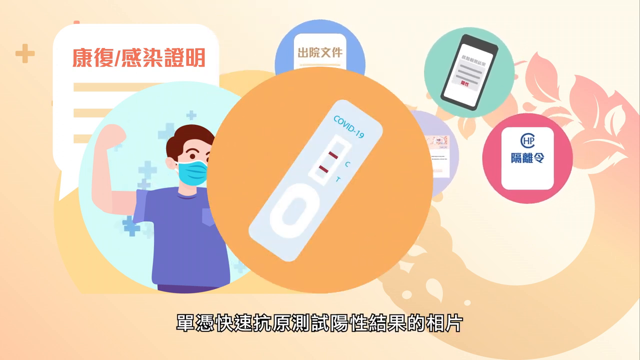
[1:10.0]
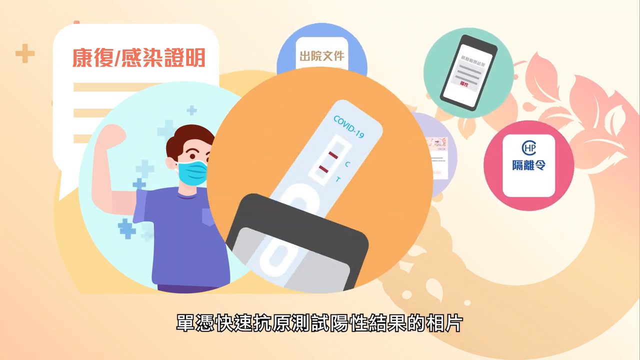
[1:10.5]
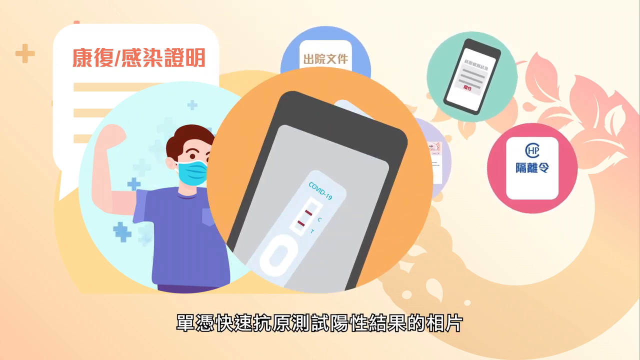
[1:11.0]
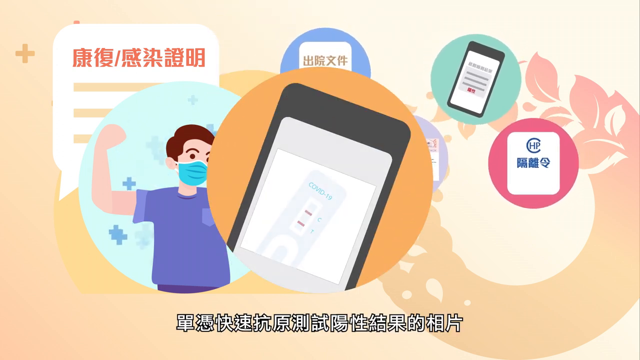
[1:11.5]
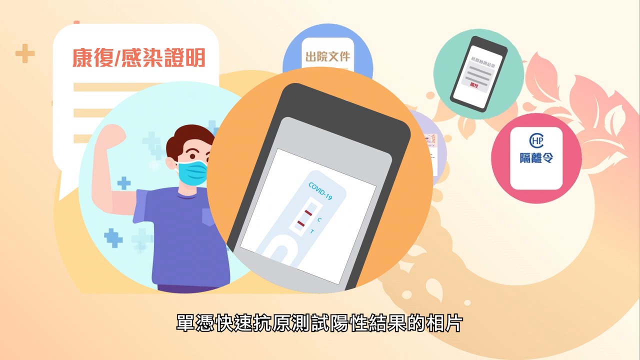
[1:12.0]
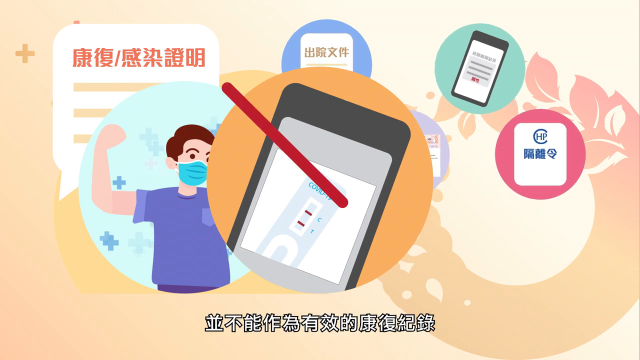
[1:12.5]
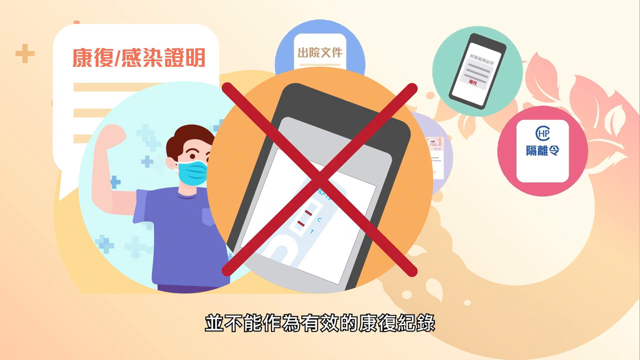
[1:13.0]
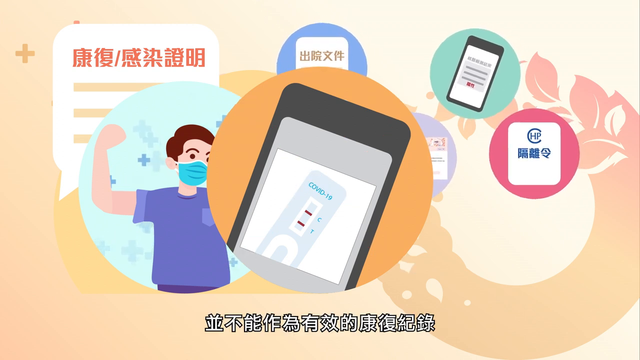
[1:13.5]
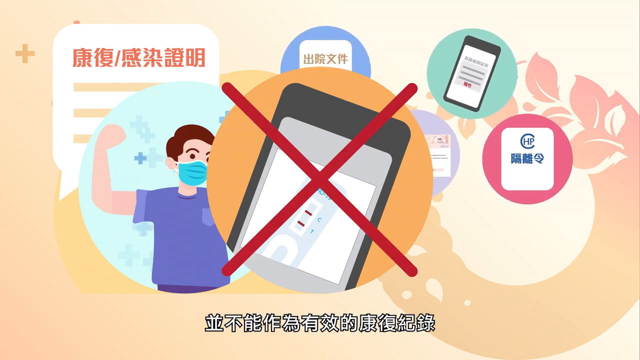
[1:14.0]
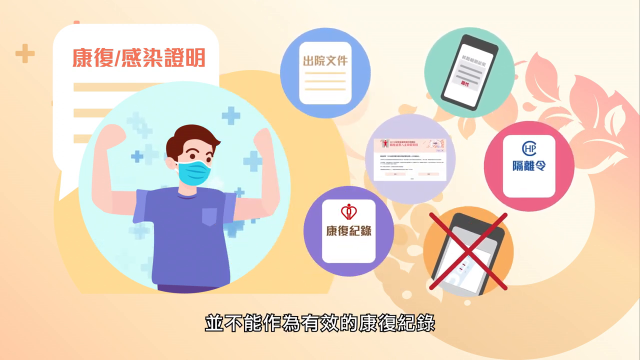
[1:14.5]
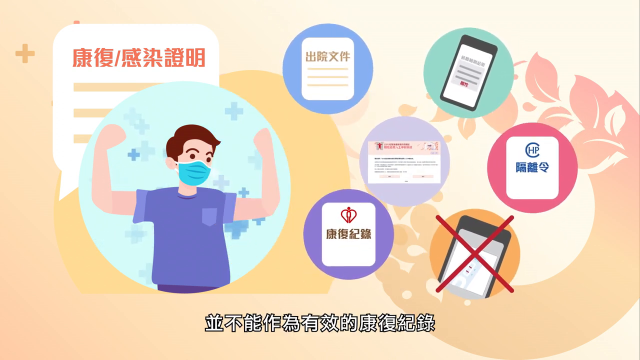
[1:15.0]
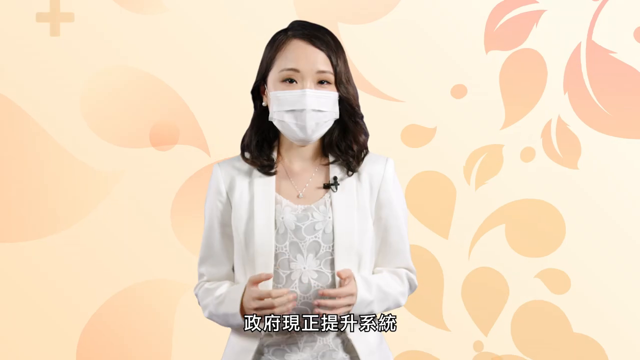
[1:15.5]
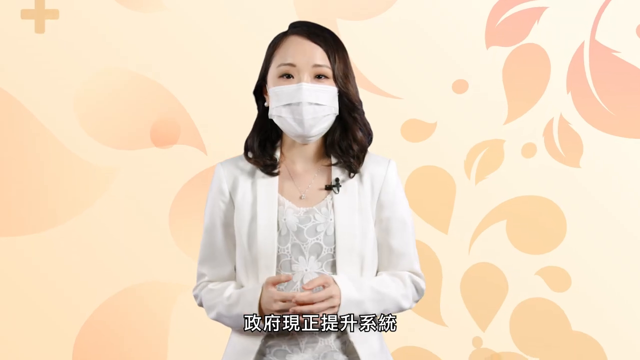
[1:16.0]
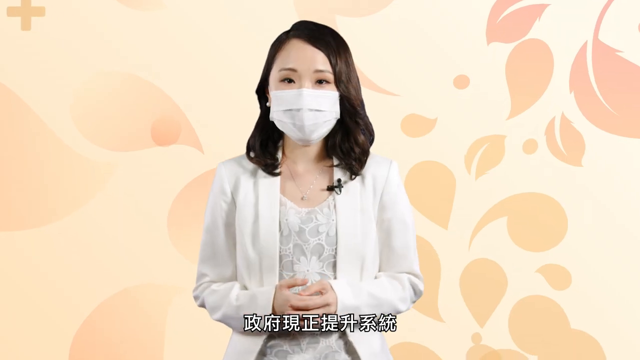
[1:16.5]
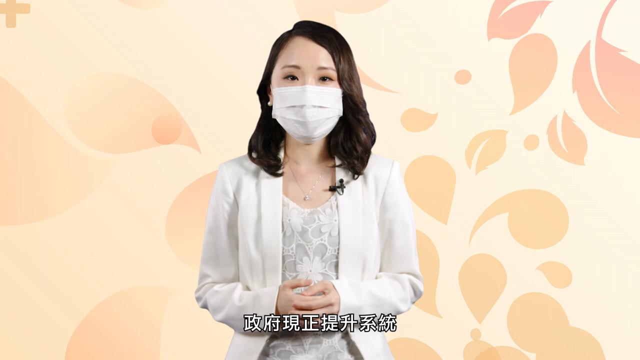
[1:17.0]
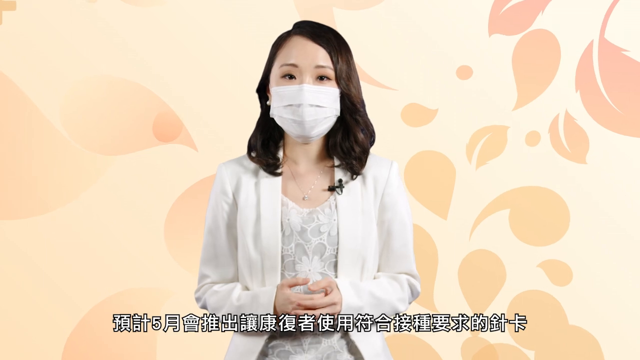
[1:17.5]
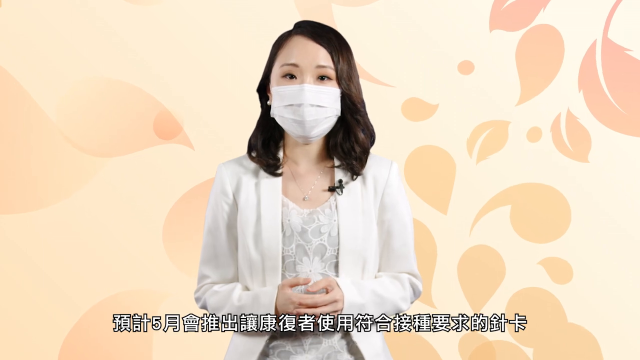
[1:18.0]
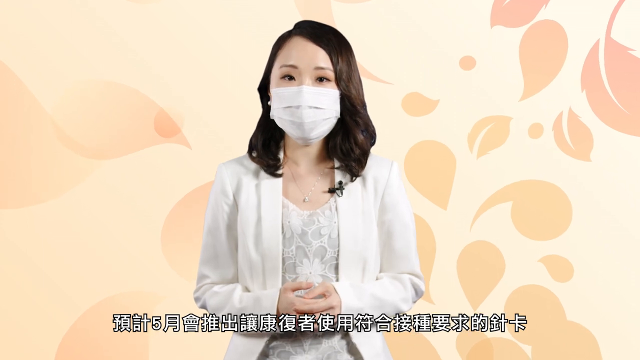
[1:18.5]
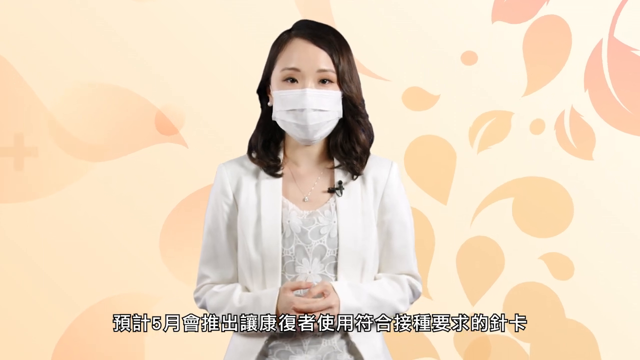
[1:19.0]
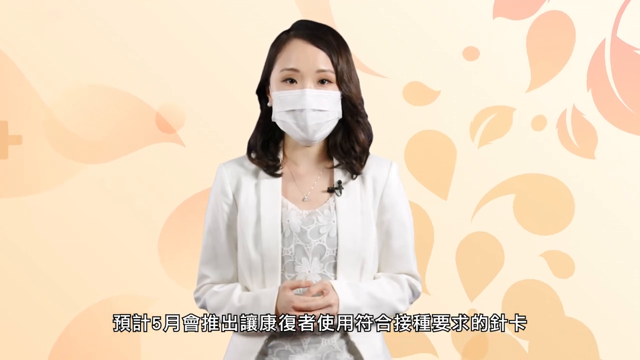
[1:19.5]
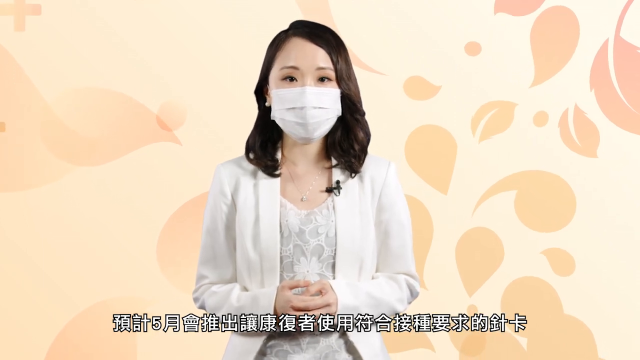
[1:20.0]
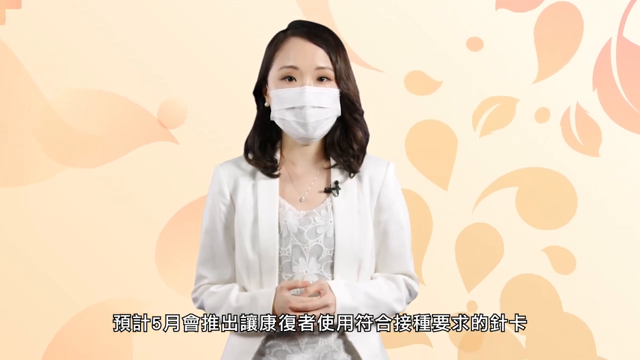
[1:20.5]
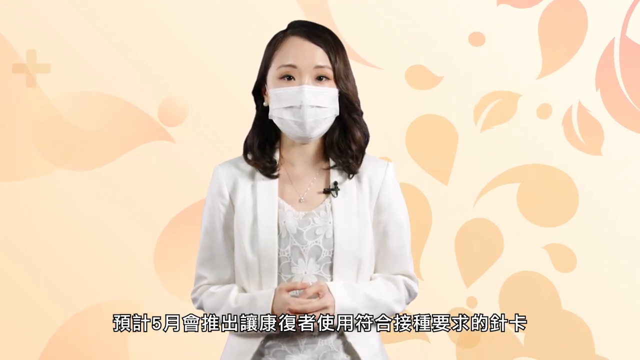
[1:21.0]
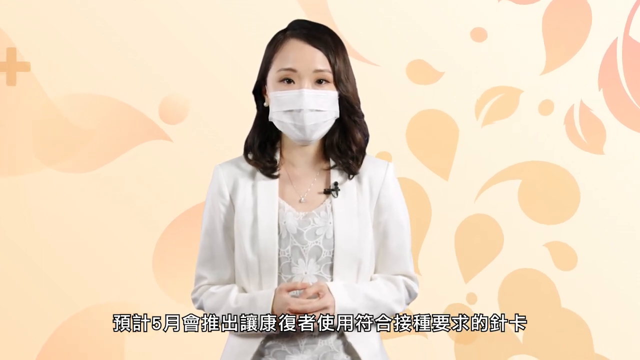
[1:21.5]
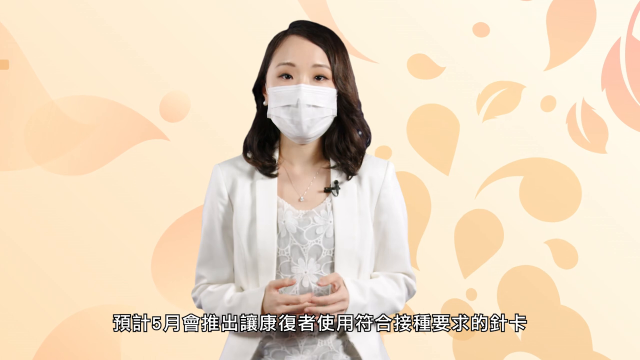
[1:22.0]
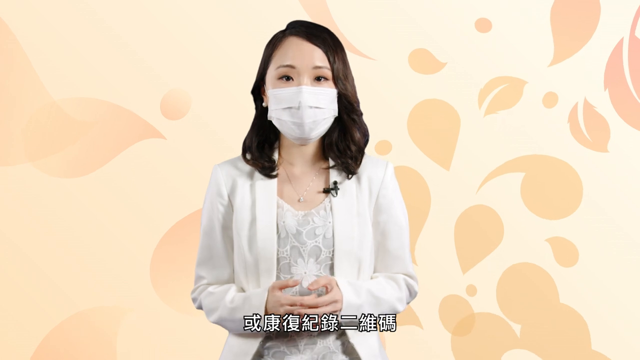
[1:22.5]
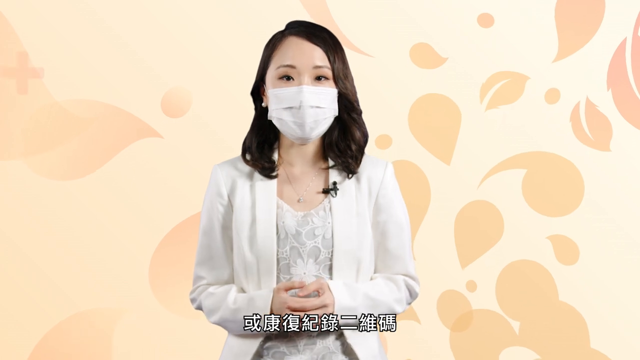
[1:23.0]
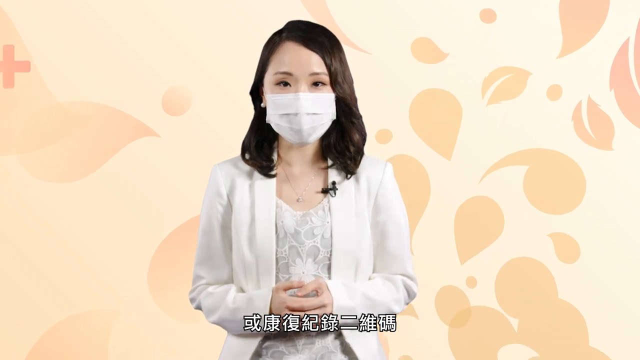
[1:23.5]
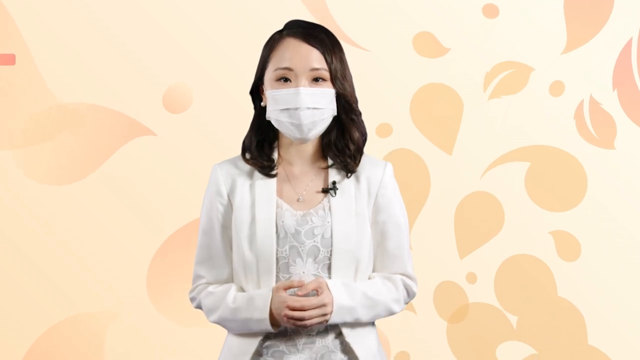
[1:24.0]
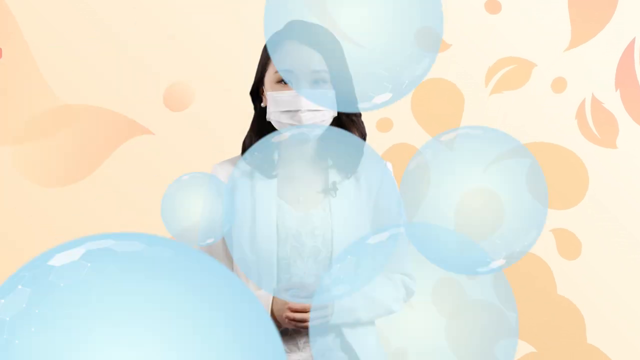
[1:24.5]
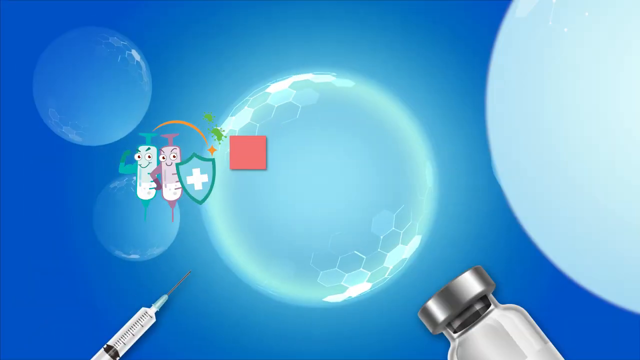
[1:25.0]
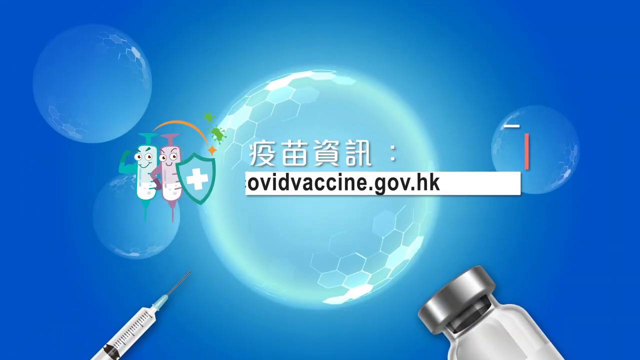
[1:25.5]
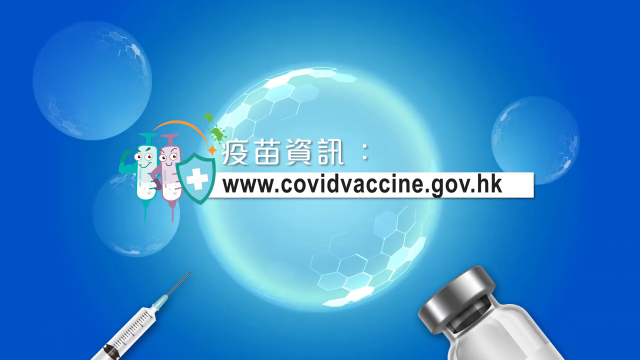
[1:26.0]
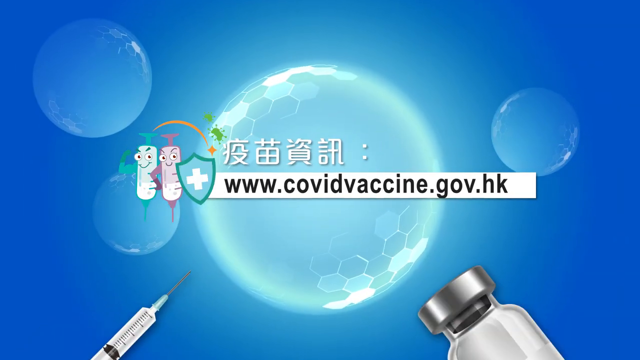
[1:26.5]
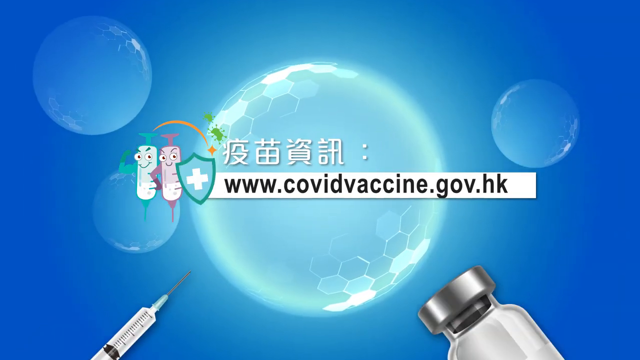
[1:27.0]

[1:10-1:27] Circles of various colors pop up on the screen, and the female presenter is shown speaking. After more circles, the speaker comes up on screen, and then the video segues into a final blue-based screen with a pop-up showing the address "www.covidvaccine.gov.hk", promoting the COVID vaccine. On the left are two needles with faces, a purple one and a green one. The presenter wears a mask, a lavalier mic, and a necklace. The background behind her is kind of beige with flower petals.